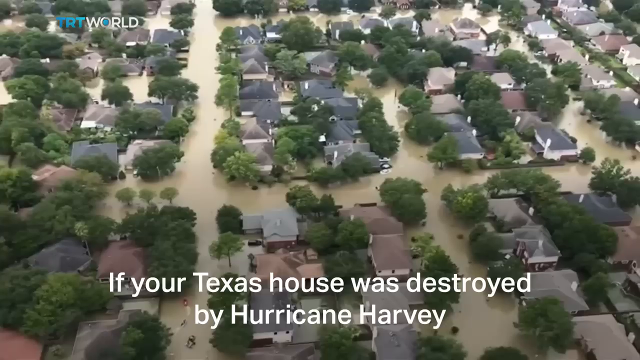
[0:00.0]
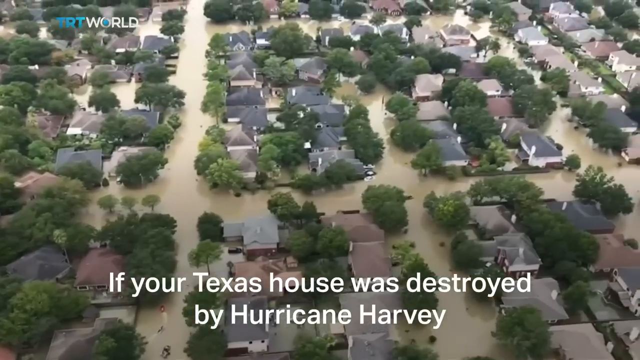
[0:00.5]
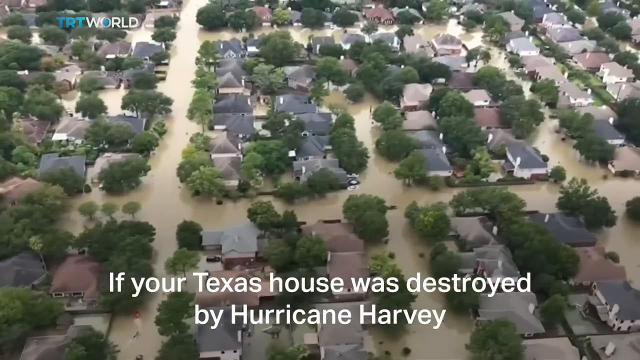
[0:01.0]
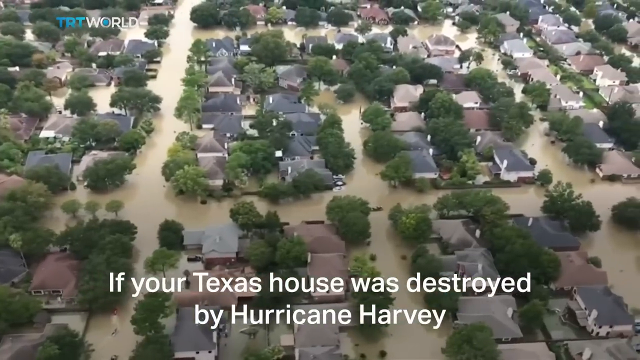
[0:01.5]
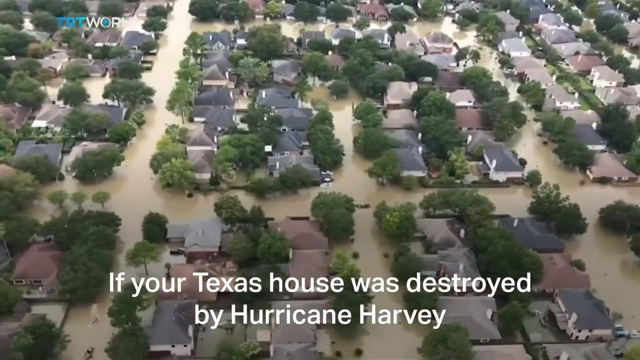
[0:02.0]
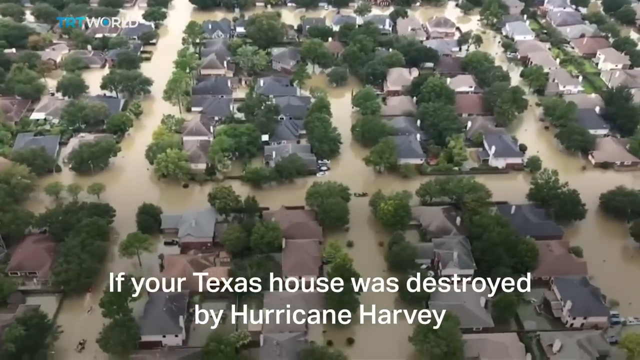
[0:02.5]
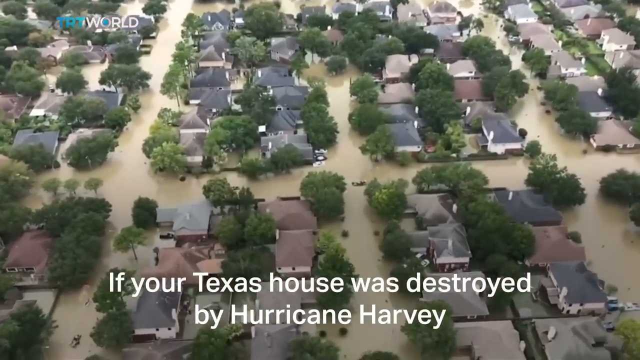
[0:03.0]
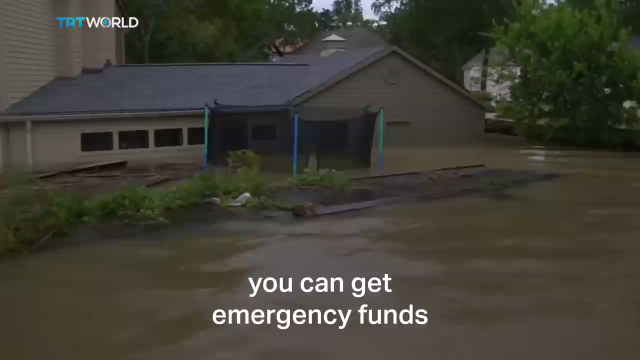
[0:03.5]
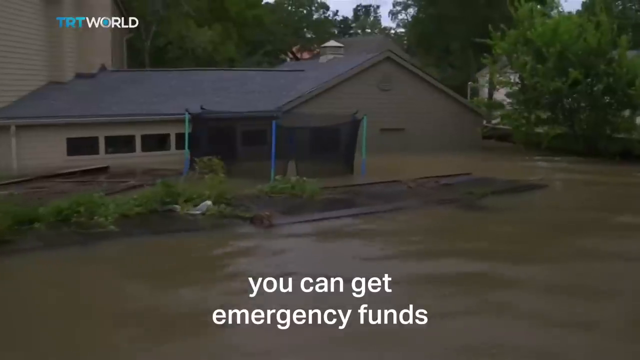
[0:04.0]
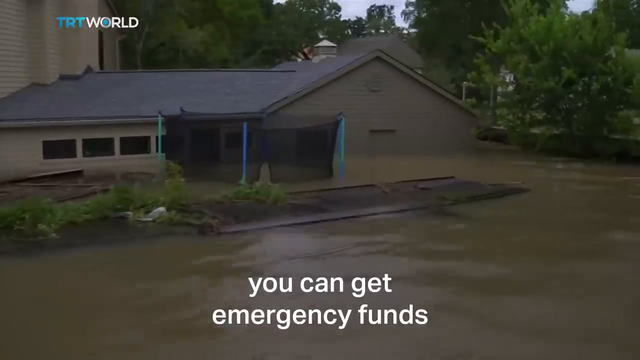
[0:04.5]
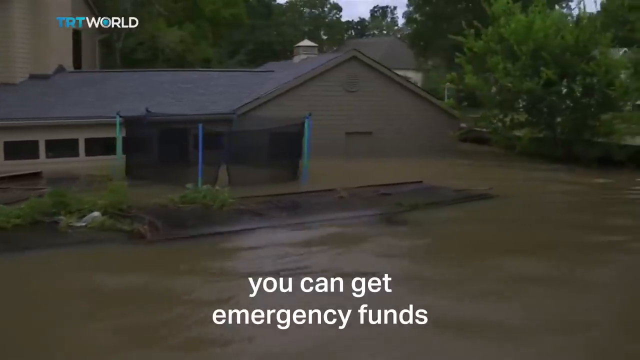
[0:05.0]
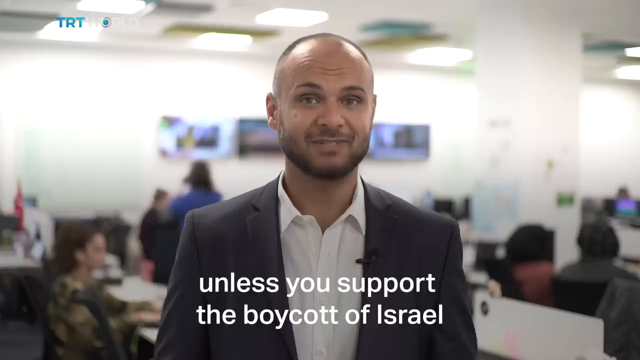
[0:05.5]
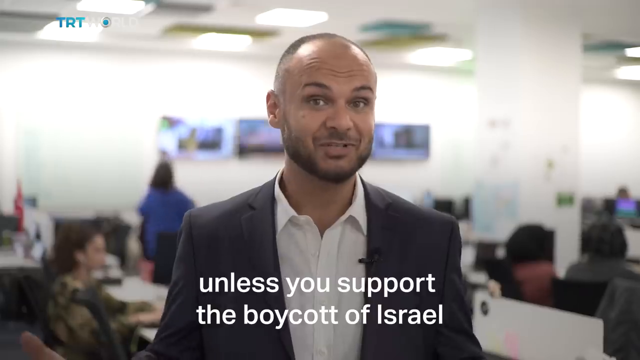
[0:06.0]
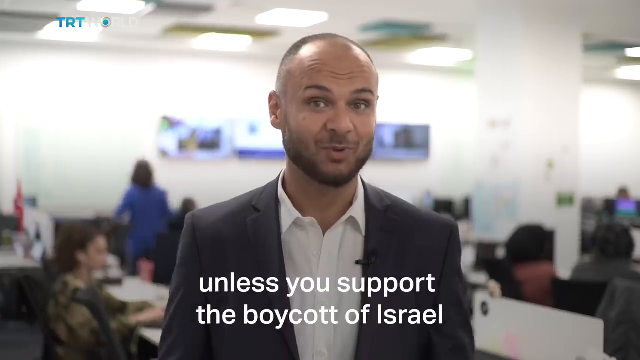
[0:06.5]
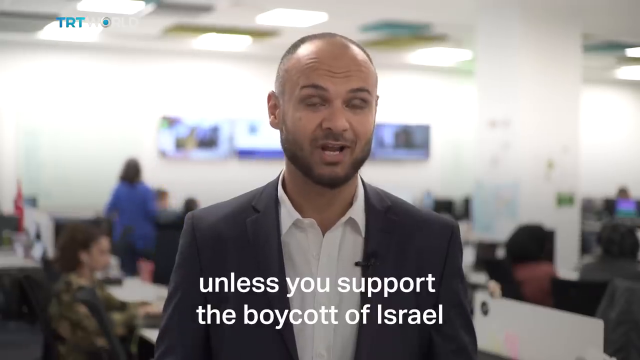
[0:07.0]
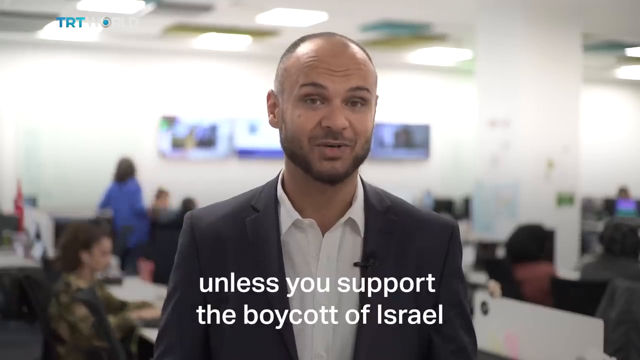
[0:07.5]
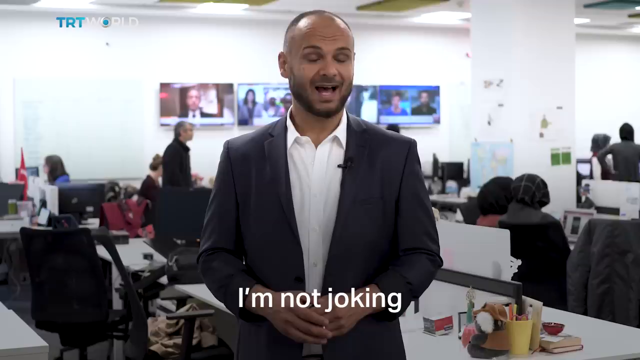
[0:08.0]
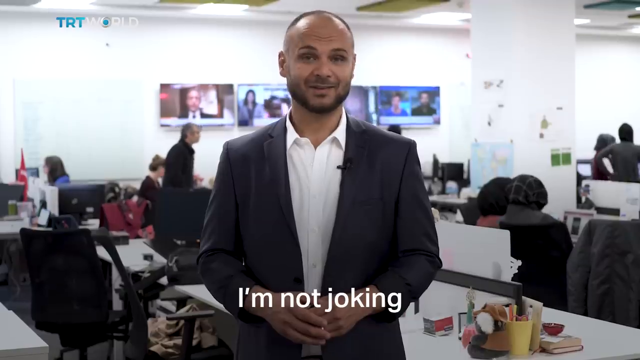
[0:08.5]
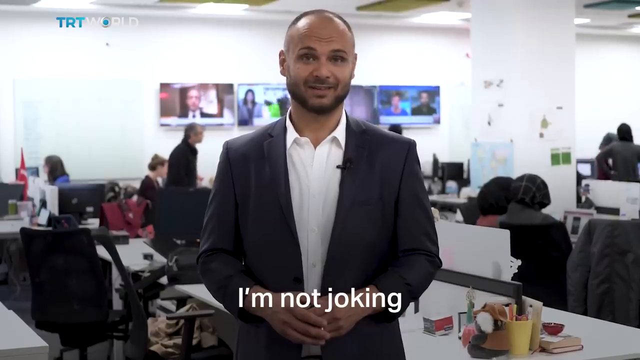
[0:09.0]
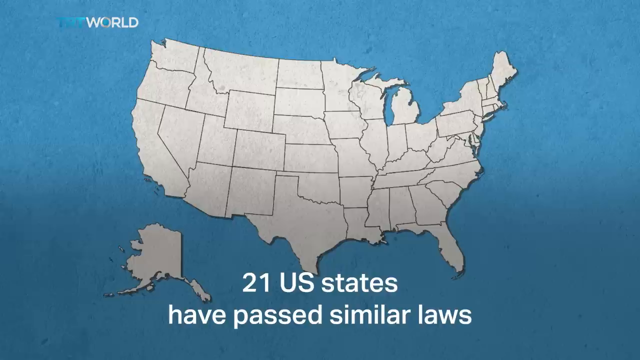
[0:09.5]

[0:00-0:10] The video shows flooding caused by Hurricane Harvey, with "TRT World" written in the top left corner. Houses stand half submerged in brown water. Captions along the bottom of the video read, "if your Texas house was destroyed by Hurricane Harvey, you can get emergency funds." A news reporter or correspondent then talks toward the camera in a room; in the background are offices, office tables and office chairs, as well as other people.